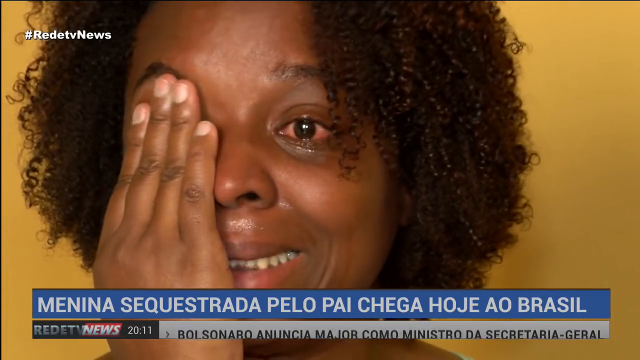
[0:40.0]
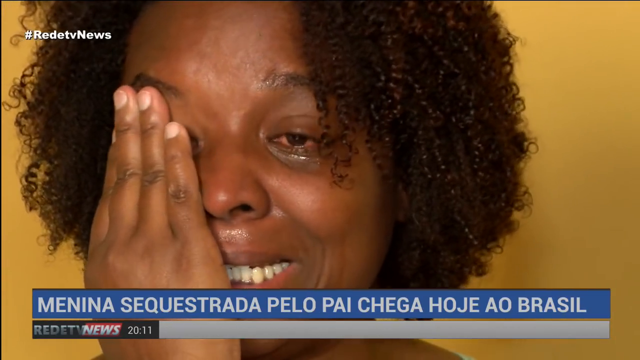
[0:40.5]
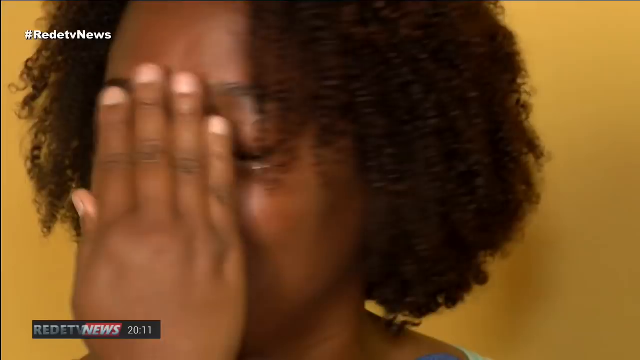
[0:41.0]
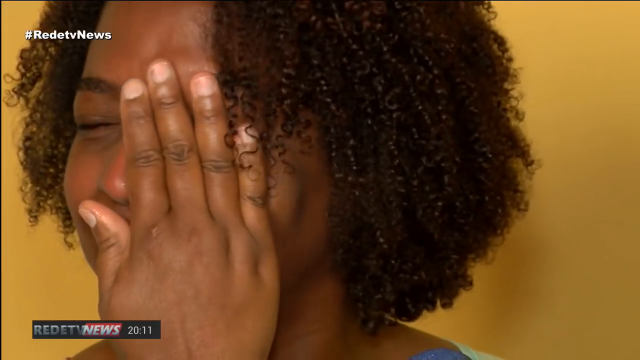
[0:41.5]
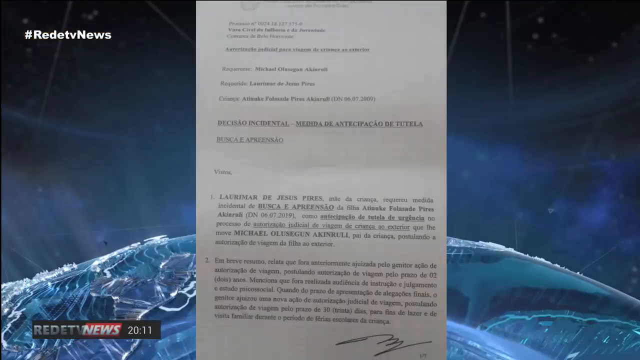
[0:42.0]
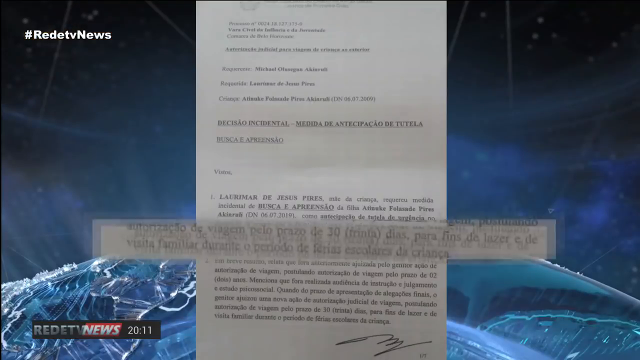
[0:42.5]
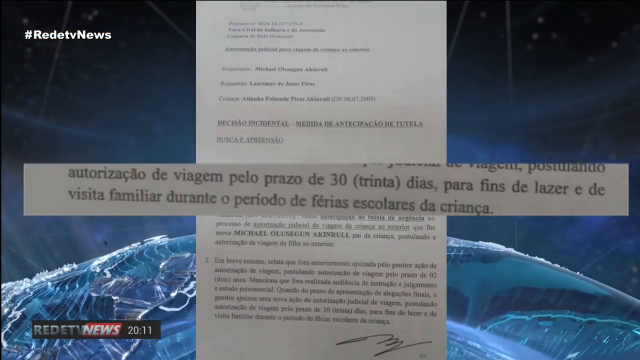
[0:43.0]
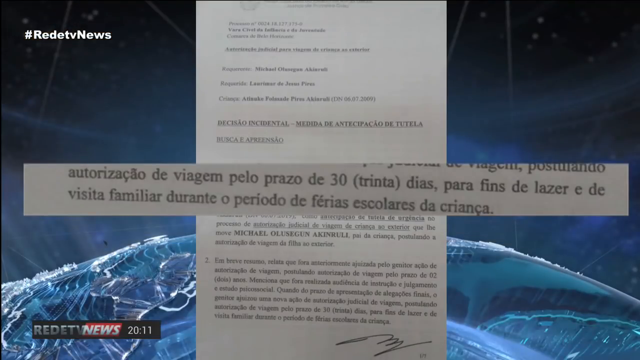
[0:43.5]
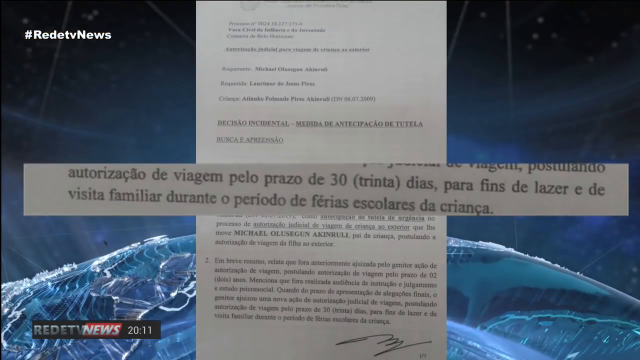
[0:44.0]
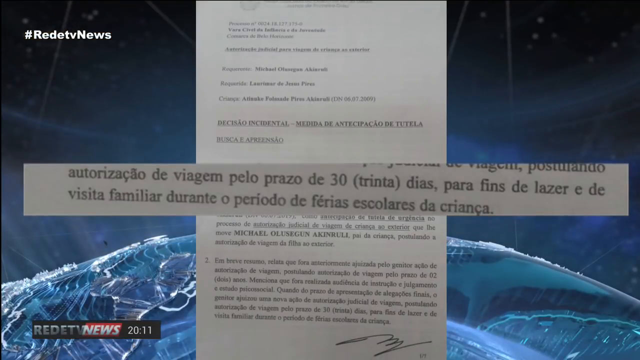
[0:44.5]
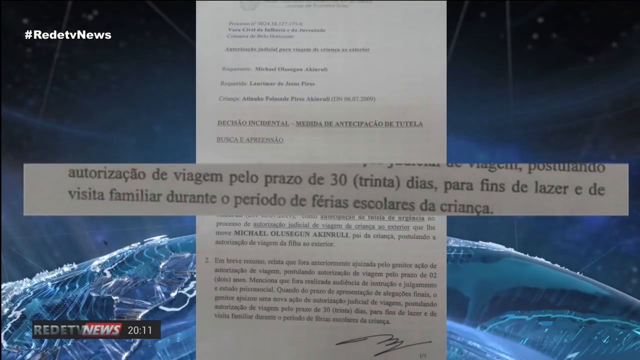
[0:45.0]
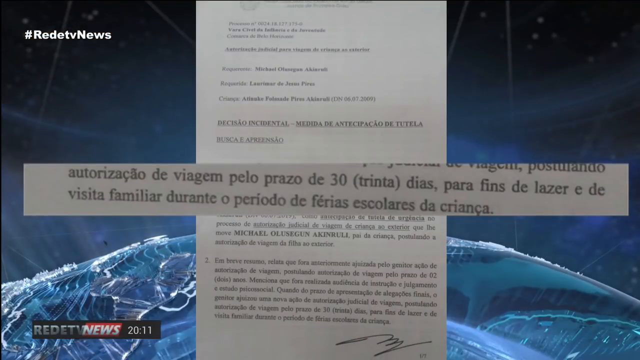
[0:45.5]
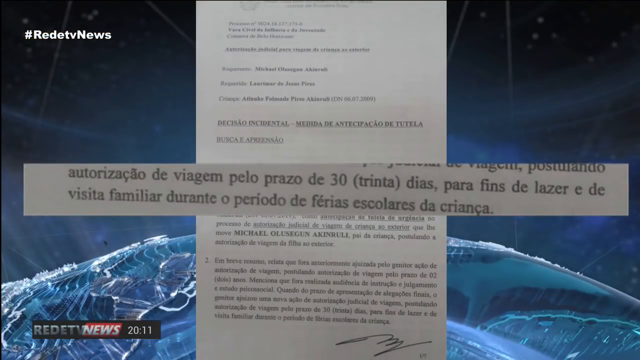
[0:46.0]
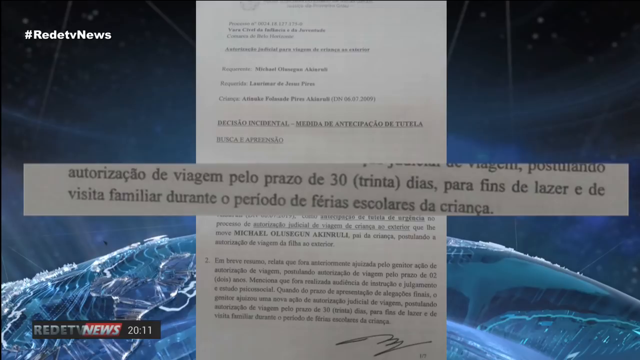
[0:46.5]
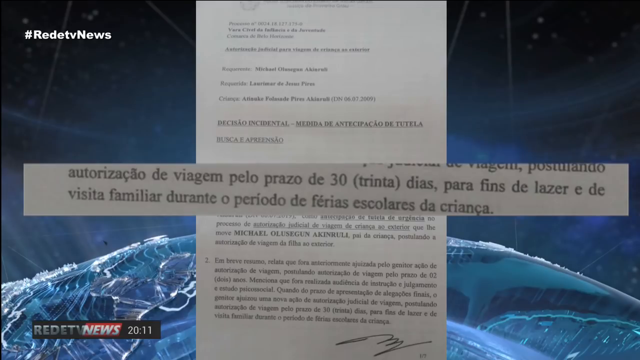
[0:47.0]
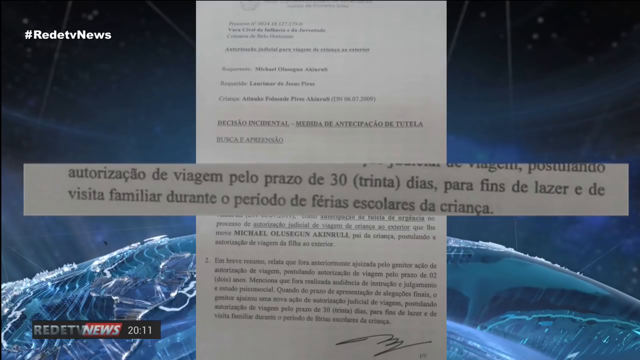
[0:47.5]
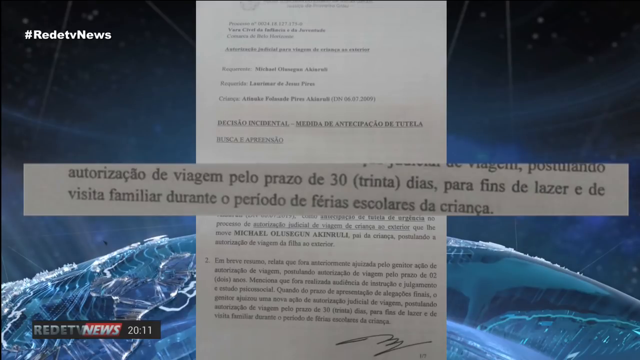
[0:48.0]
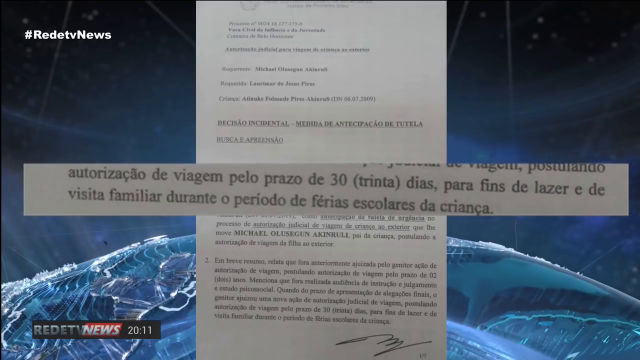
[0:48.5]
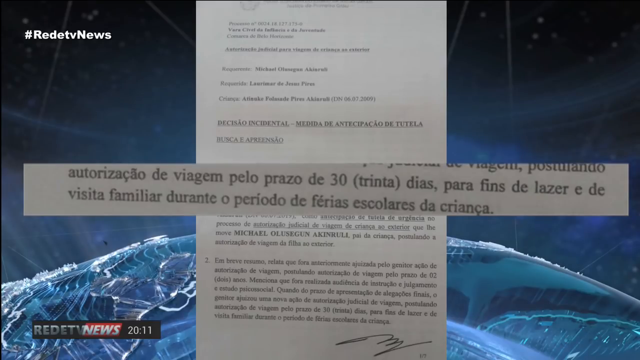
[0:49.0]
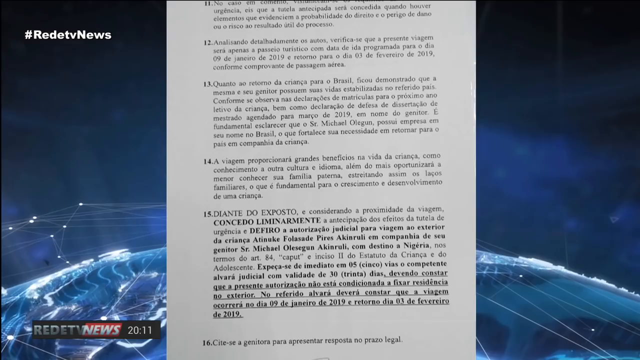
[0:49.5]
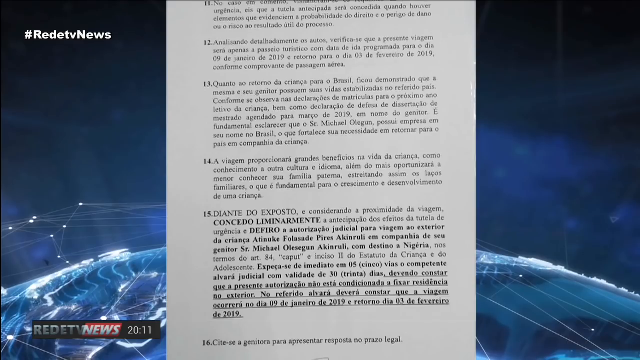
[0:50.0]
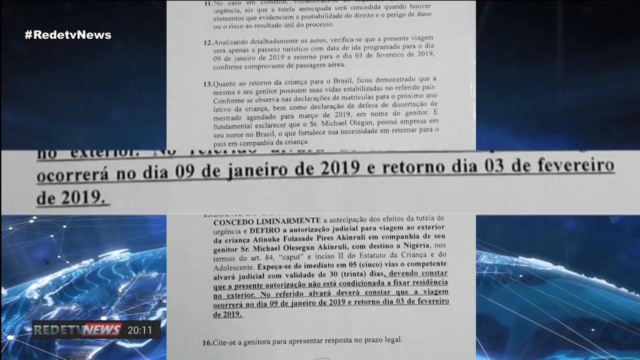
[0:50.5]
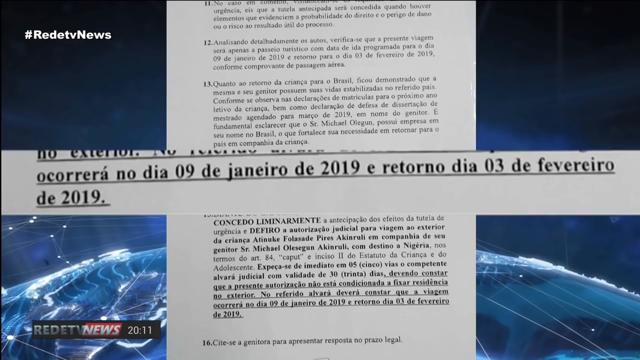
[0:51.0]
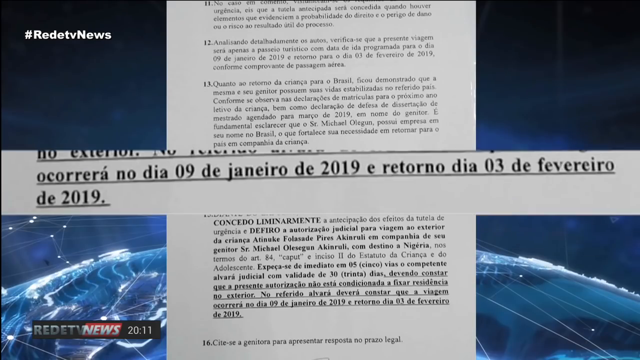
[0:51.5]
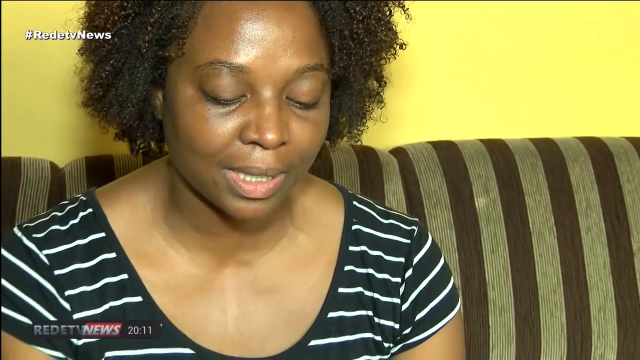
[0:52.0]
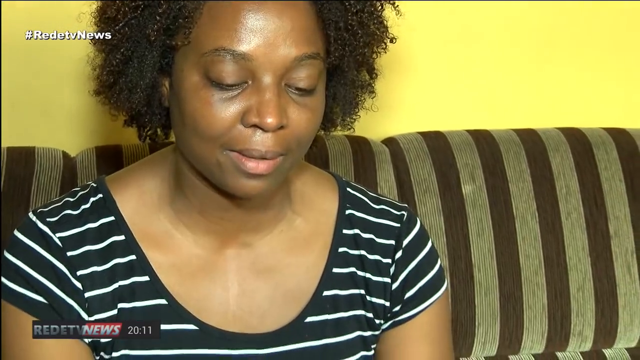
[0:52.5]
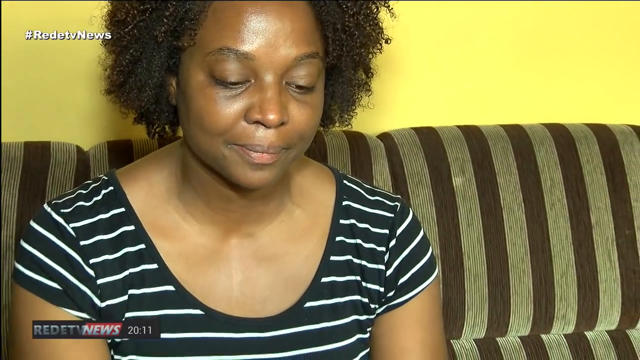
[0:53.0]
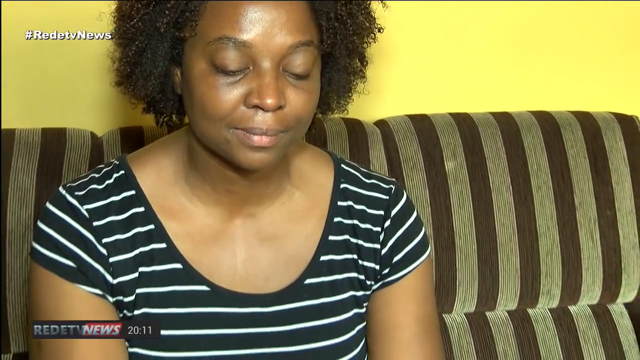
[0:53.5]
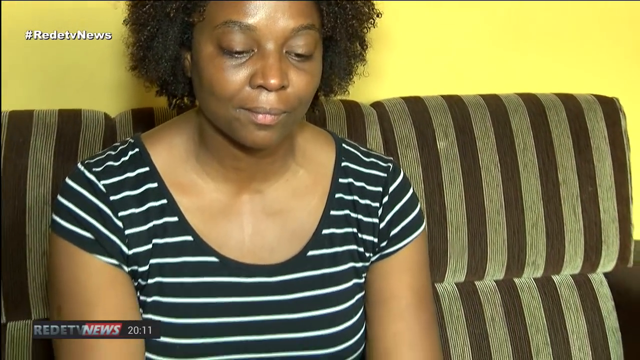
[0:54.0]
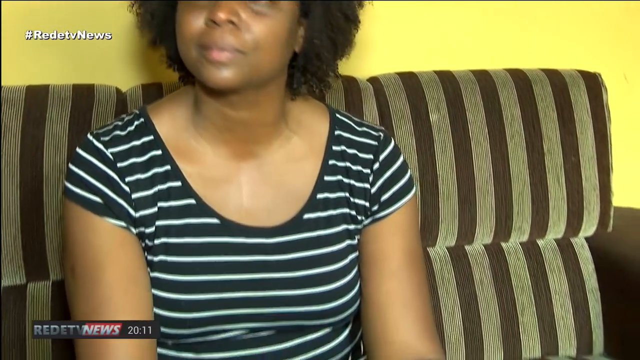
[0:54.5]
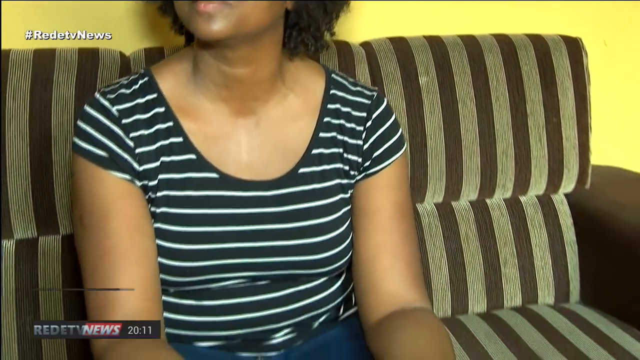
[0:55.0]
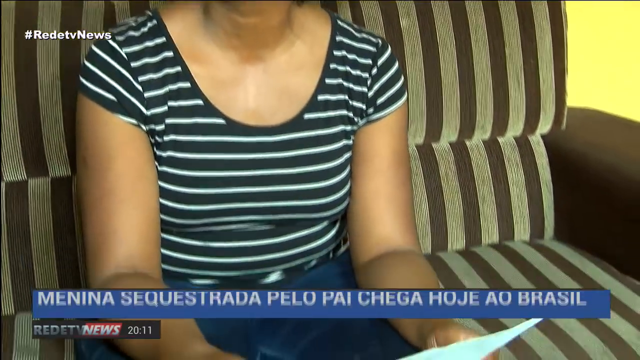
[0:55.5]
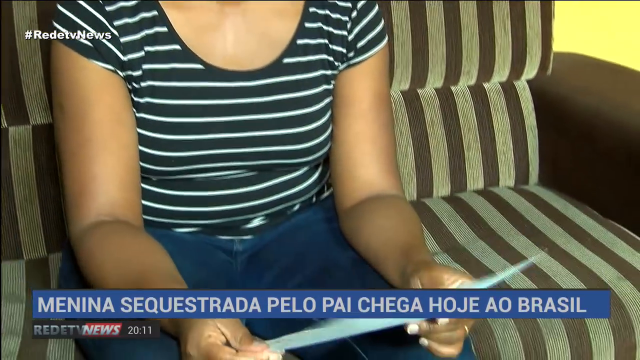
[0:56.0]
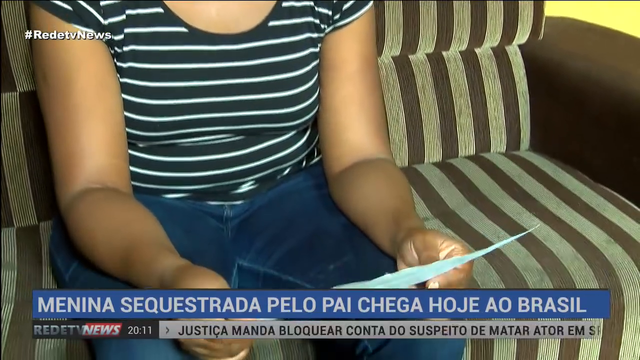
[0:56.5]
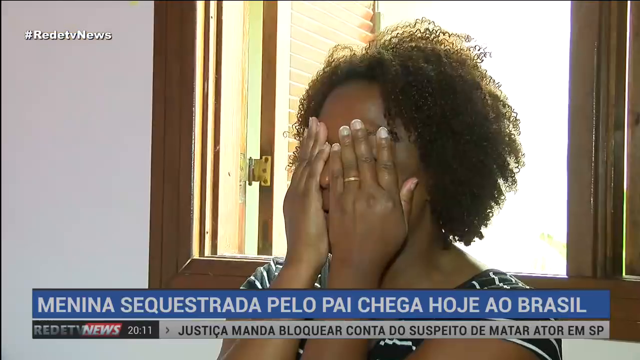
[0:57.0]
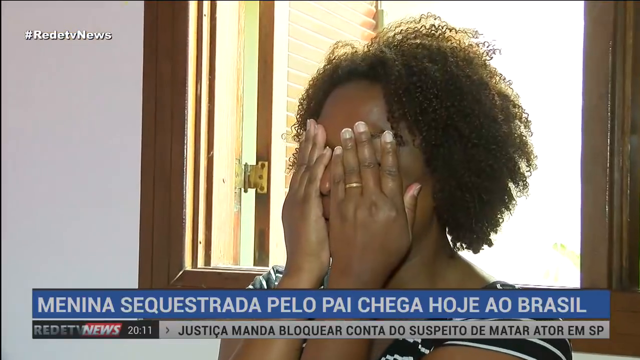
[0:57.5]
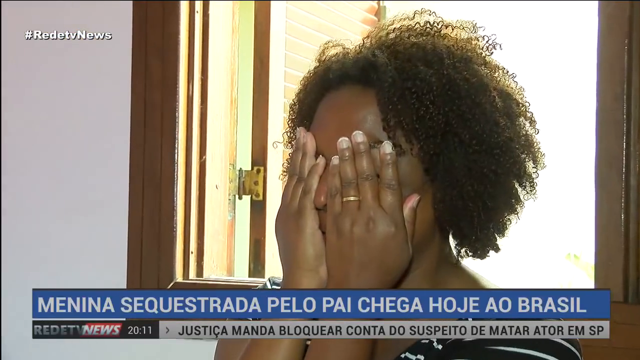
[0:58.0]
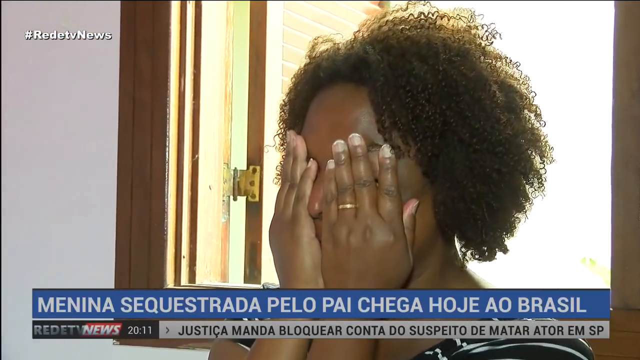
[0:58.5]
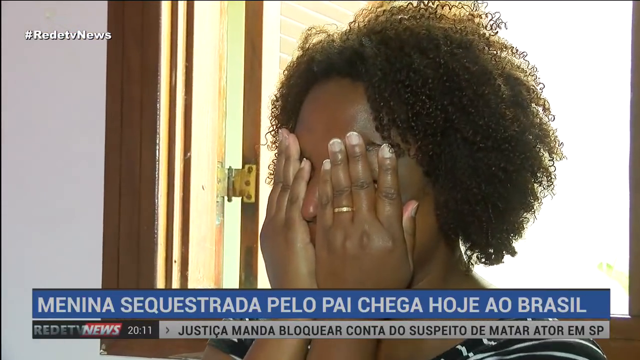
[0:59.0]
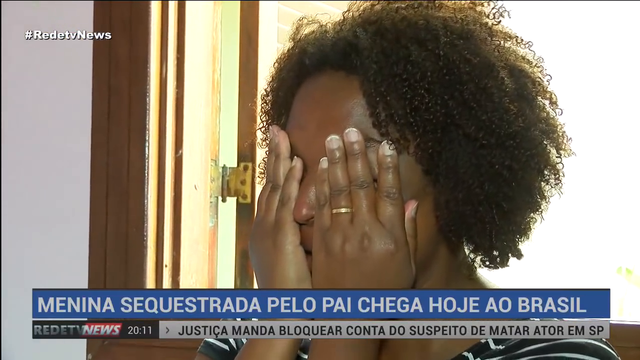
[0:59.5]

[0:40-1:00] A black woman is crying with red eyes; she has her hand over her right eye and wipes the tears away. A piece of paper that looks like a document appears on the screen, and a part of it is highlighted and zoomed in on; it is all in Spanish. The woman then sits on a couch with dark brown and light brown stripes, reading the document while holding it in two hands, and begins to cry. She puts both hands over her eyes, a wedding band visible on her hand, sobbing into her hands by herself. She wears a striped shirt and what looks like jeans. The screen shows "Reedy TV News" with the time 2011.